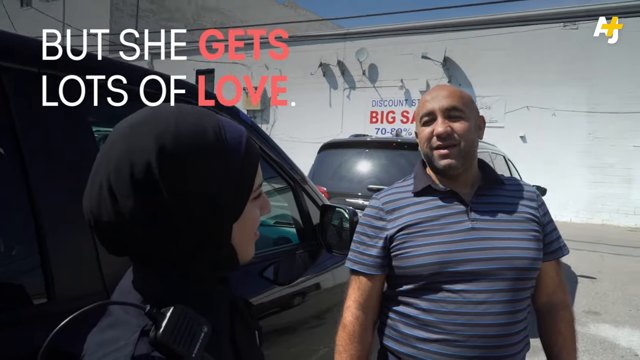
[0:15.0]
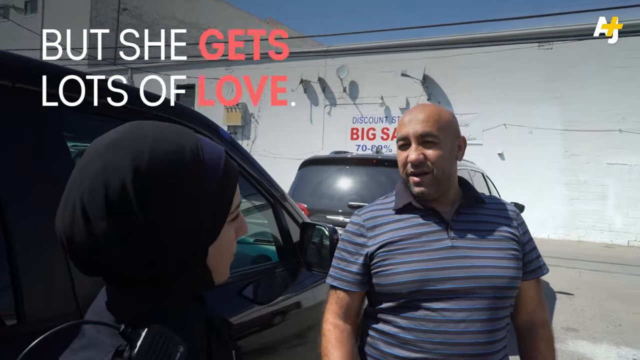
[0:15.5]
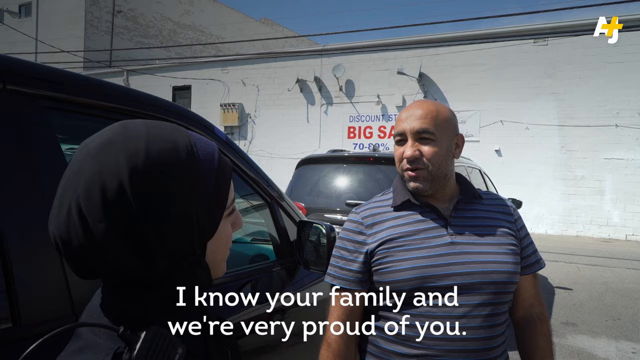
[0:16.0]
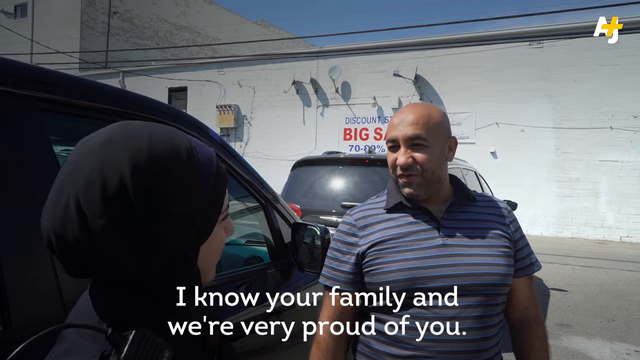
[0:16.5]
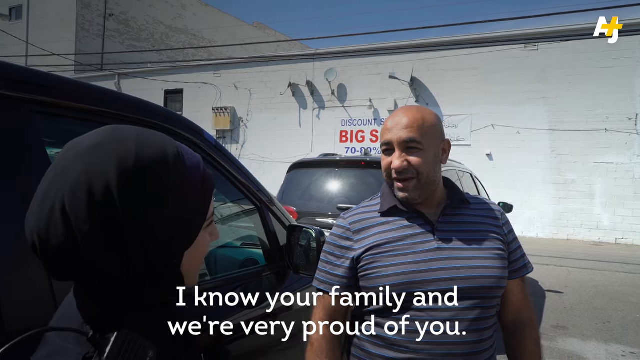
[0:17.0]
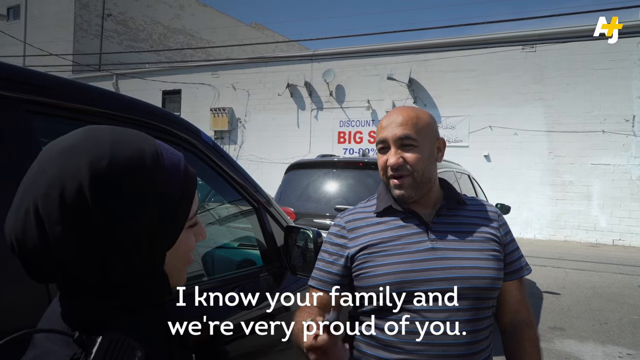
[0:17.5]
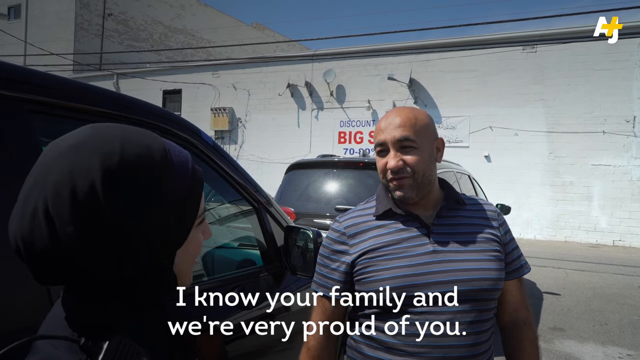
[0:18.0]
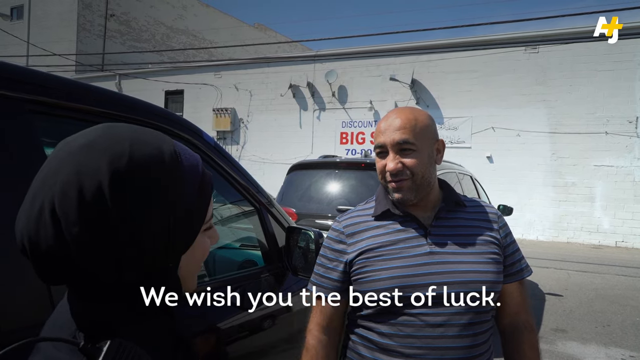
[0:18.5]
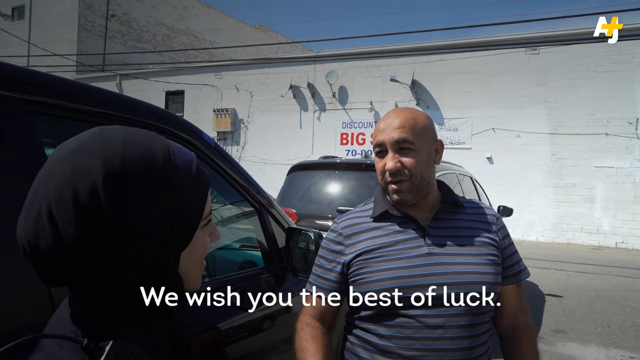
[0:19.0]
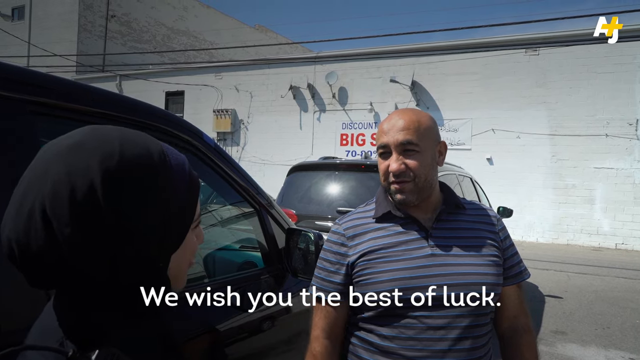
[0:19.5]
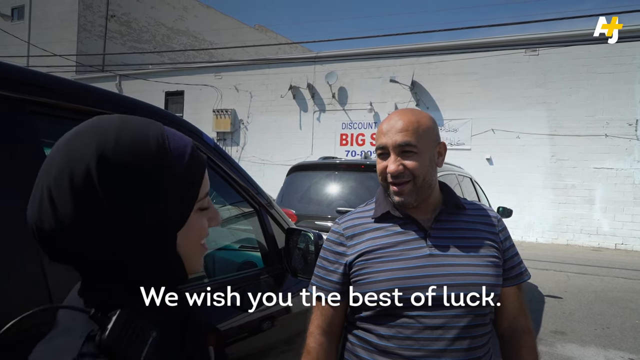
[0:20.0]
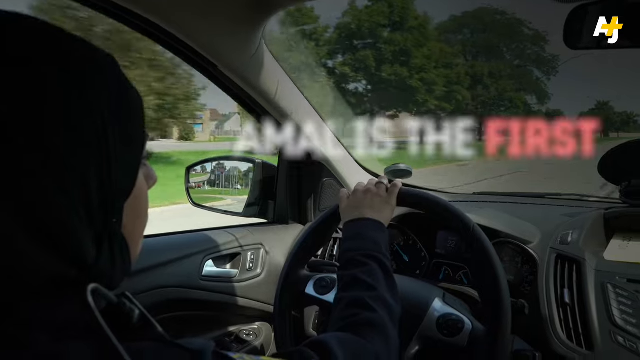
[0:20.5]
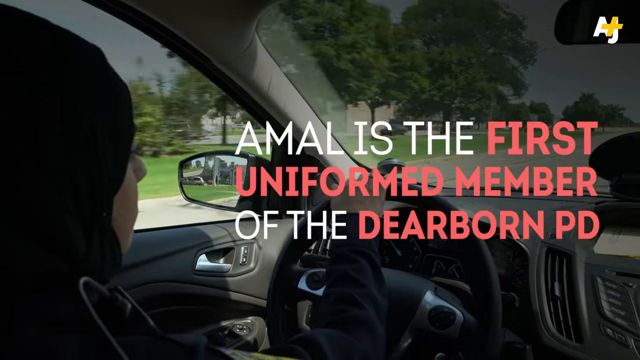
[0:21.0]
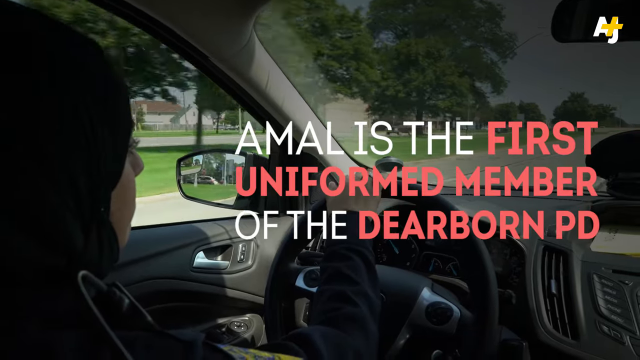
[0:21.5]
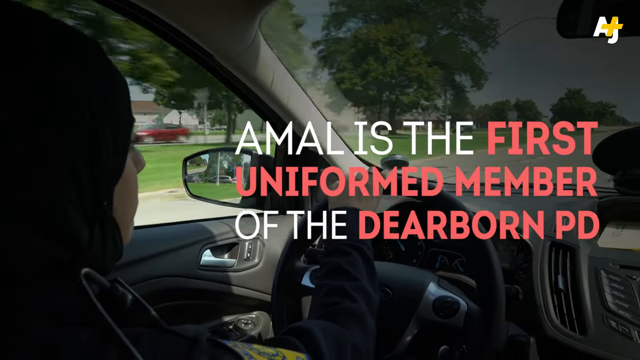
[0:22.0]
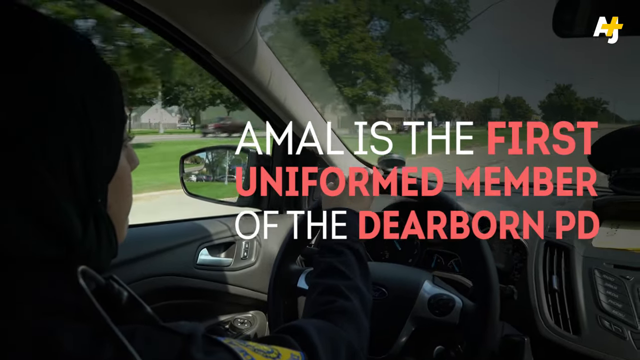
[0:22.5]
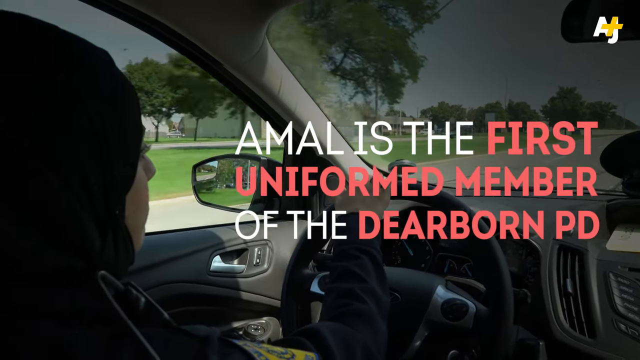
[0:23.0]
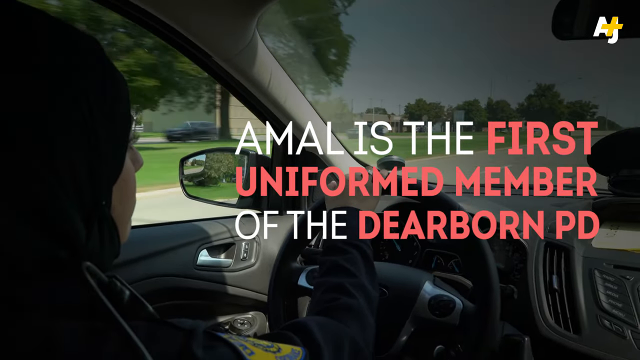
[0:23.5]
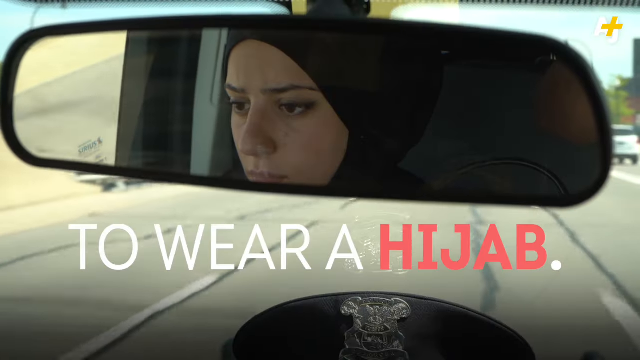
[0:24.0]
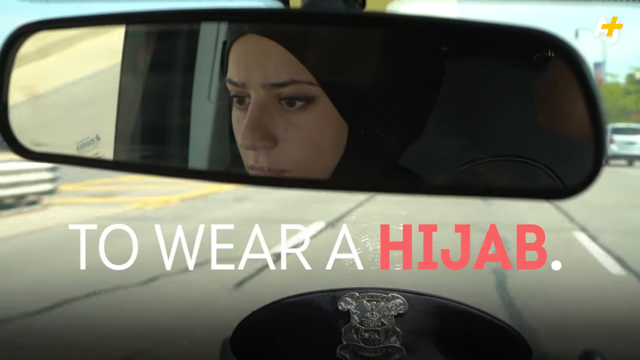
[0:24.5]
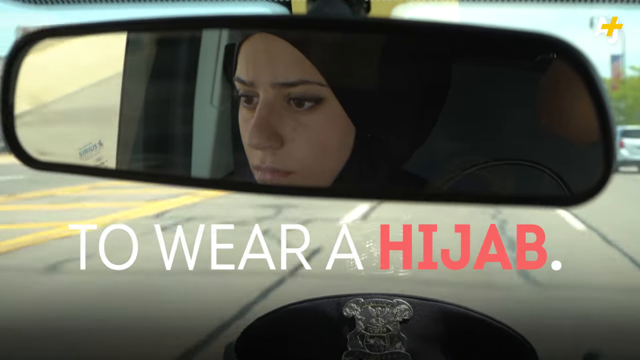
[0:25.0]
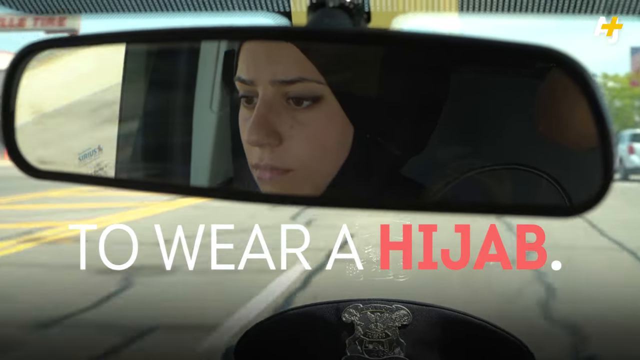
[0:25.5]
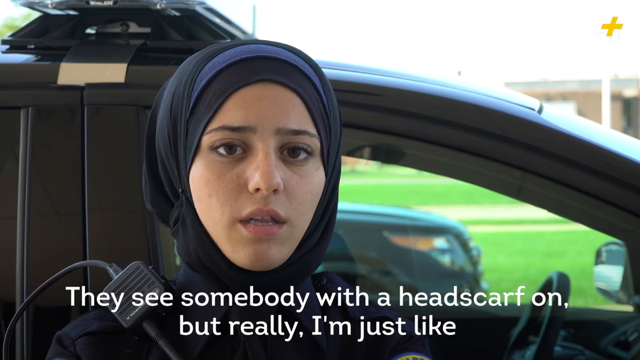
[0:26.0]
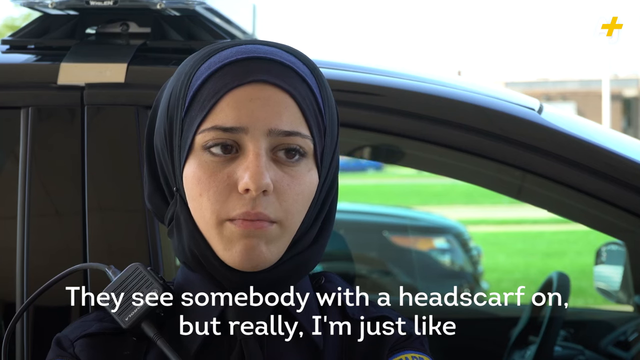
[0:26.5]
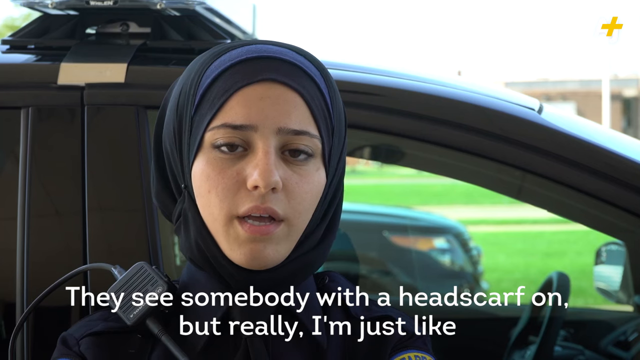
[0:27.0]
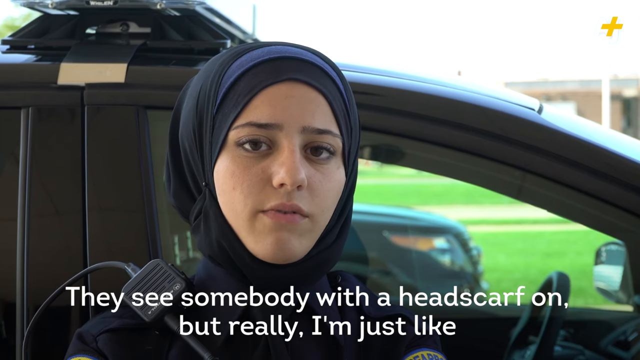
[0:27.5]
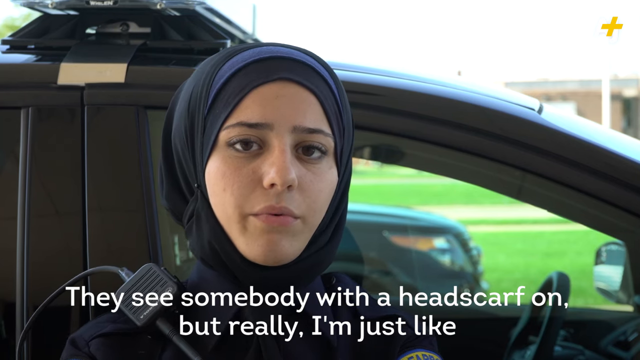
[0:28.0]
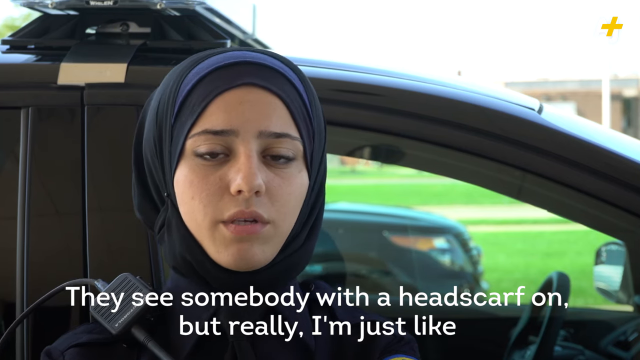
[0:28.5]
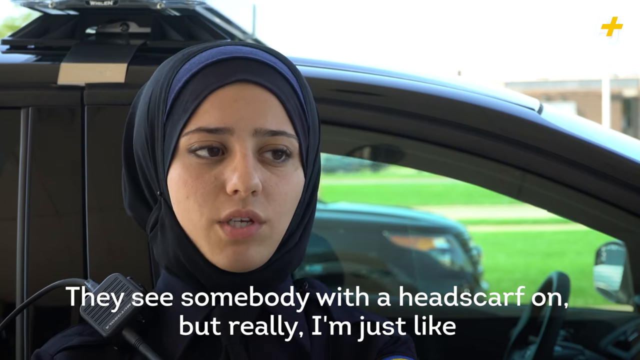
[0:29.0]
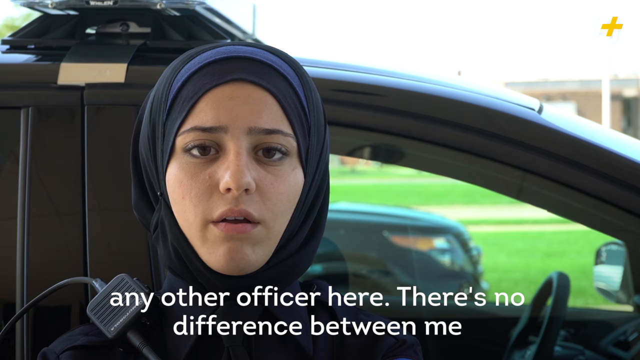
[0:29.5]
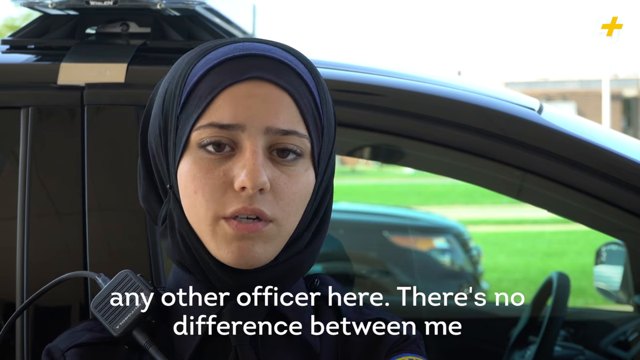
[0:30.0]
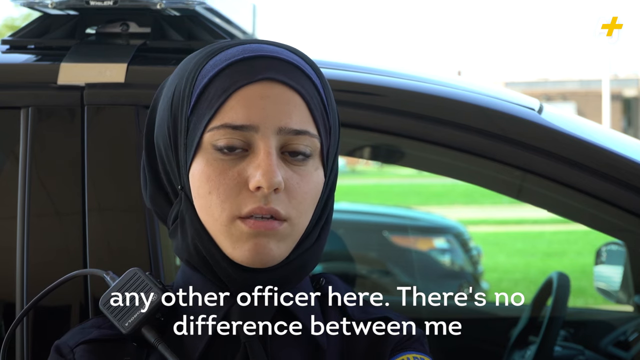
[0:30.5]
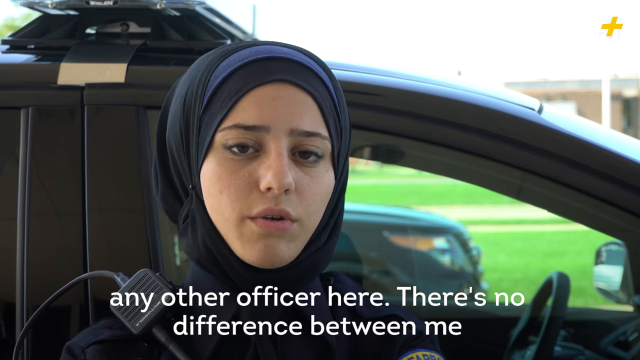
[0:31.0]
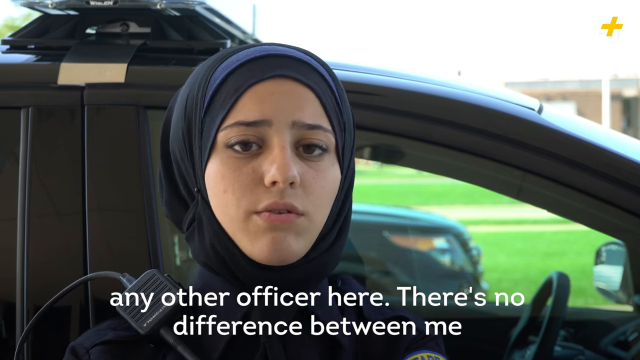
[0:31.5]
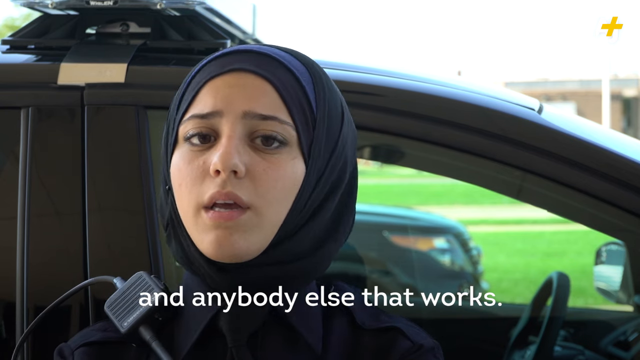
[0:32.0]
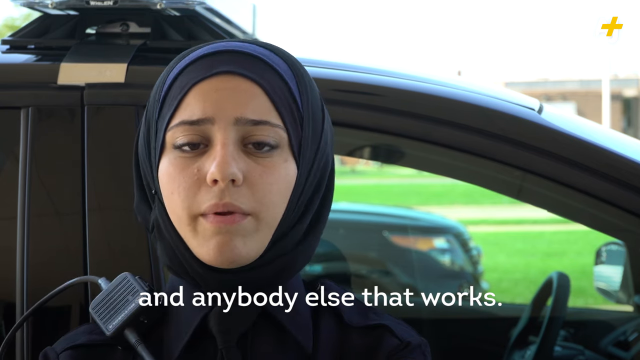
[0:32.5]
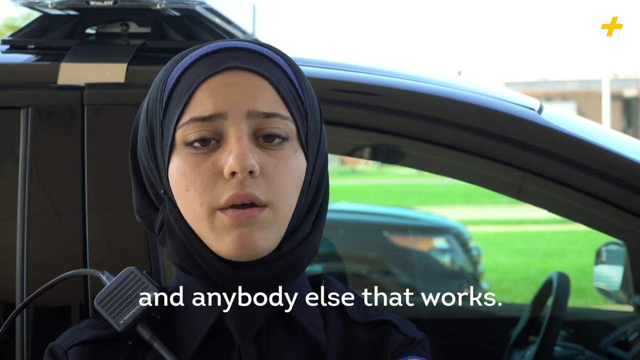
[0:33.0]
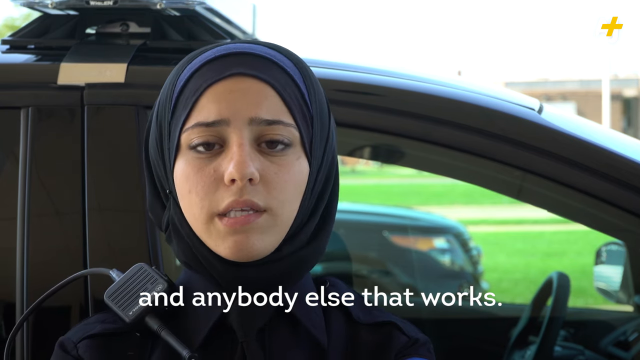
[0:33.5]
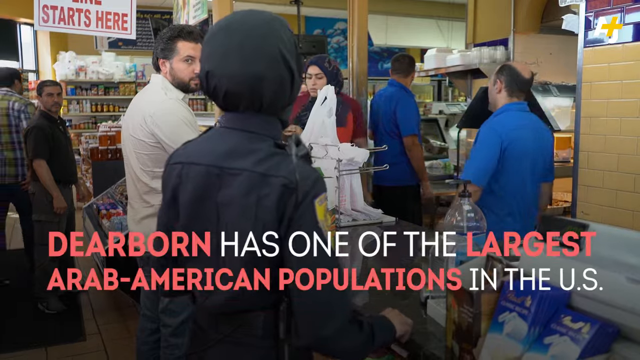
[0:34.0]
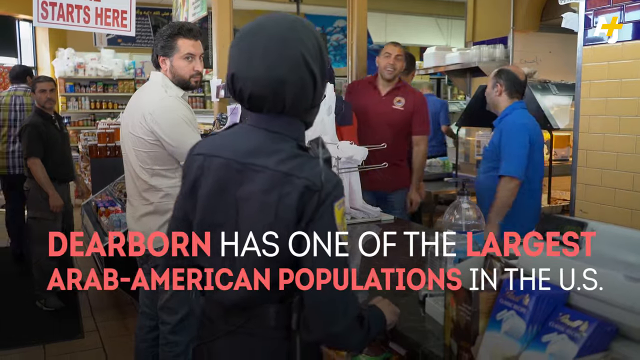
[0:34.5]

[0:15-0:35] She talks to a man who apparently knows her family and seems proud of her. The news report follows her through her day, moving from her outdoors talking to the man to her driving in her car. She is the first uniformed police officer to wear a hijab. She says there are a lot of officers like her, that she is no different from the other officers who work alongside her, and that people see somebody in a headscarf but she is just like everybody else. There also appears to be a scene of her walking into some kind of local supermarket, store or restaurant.